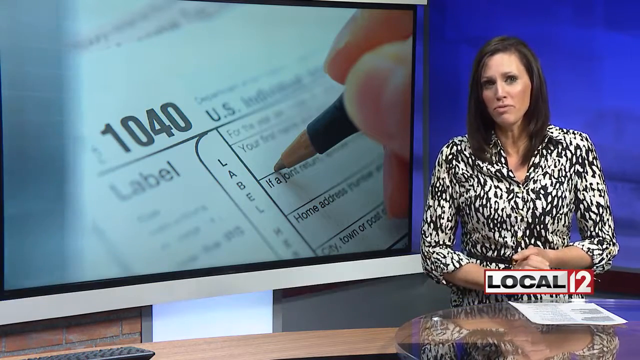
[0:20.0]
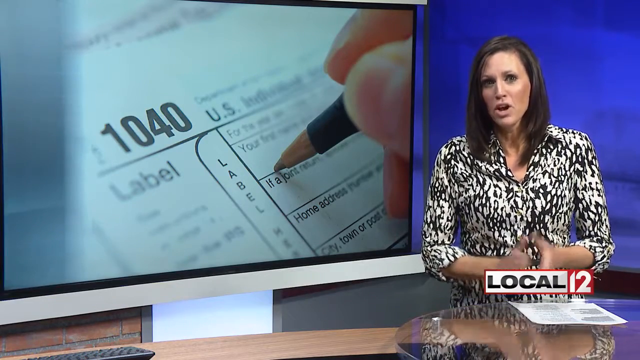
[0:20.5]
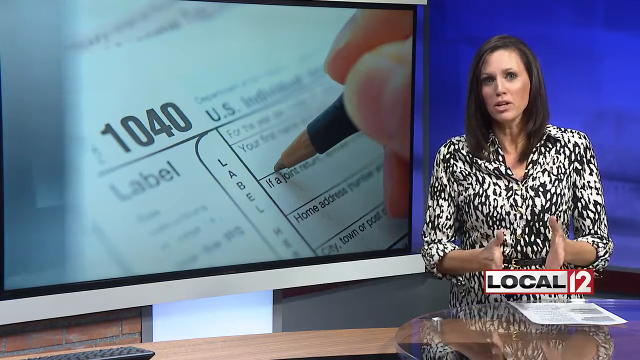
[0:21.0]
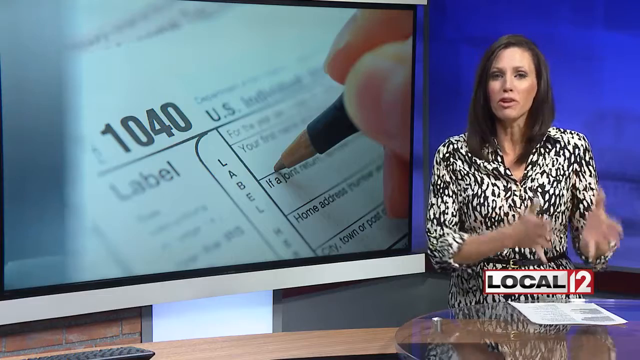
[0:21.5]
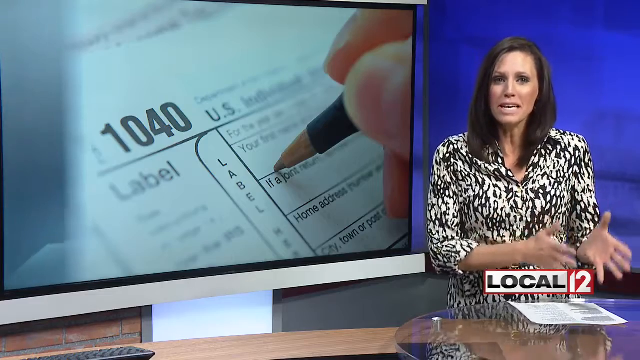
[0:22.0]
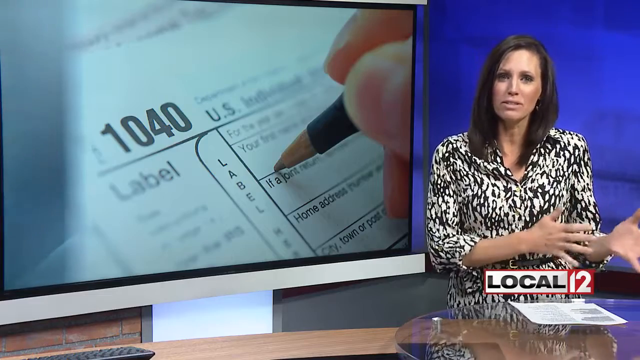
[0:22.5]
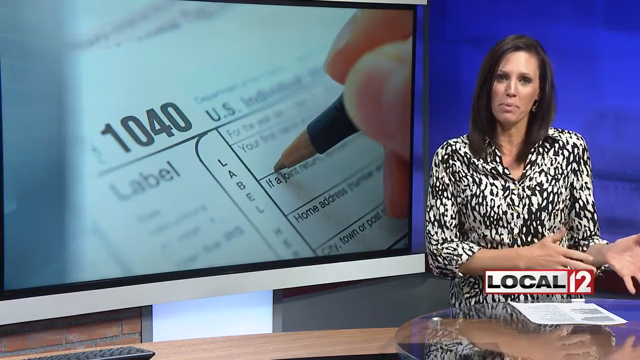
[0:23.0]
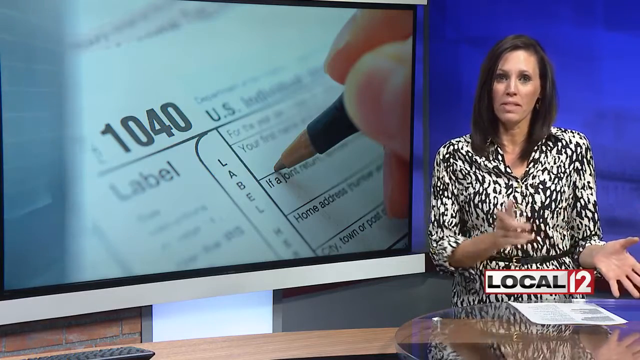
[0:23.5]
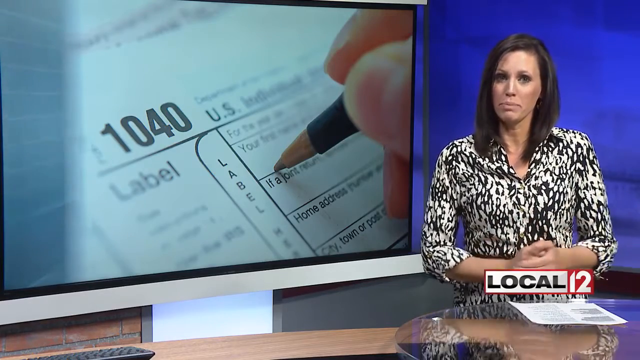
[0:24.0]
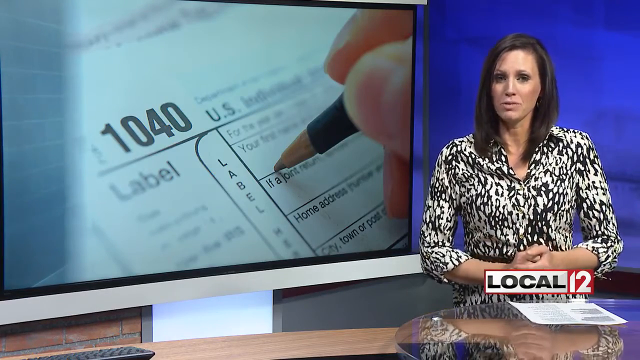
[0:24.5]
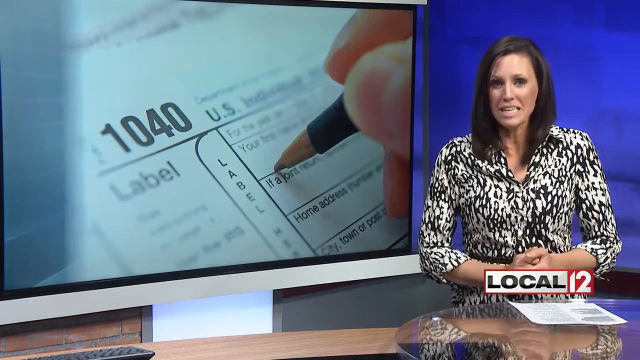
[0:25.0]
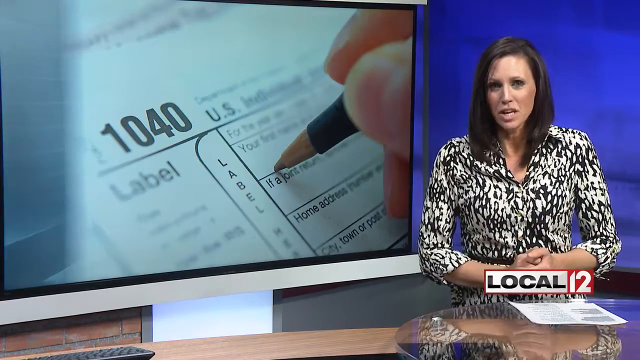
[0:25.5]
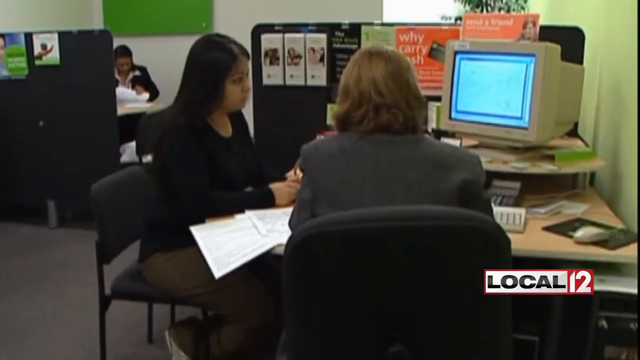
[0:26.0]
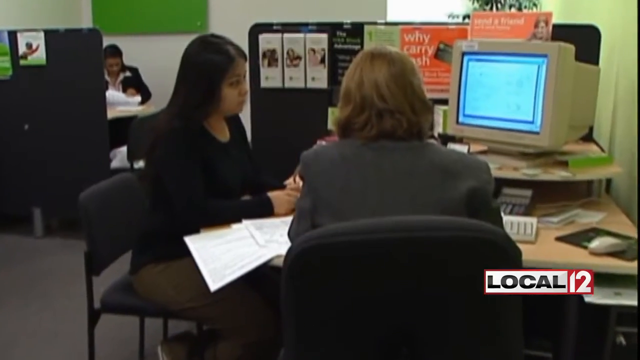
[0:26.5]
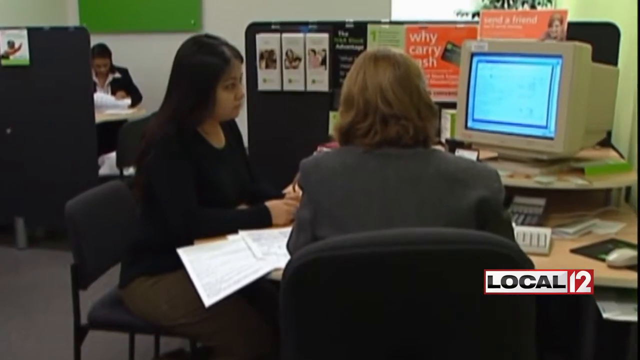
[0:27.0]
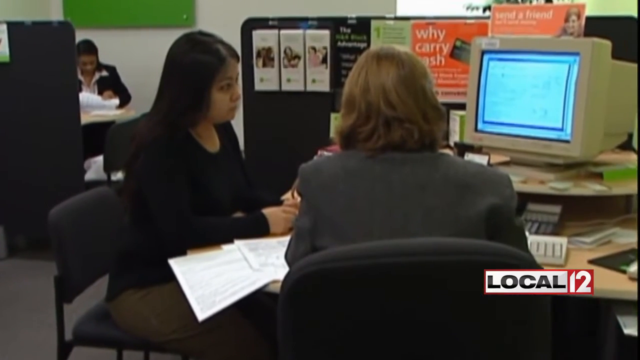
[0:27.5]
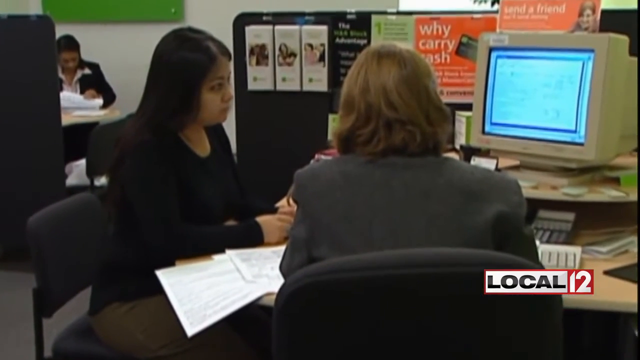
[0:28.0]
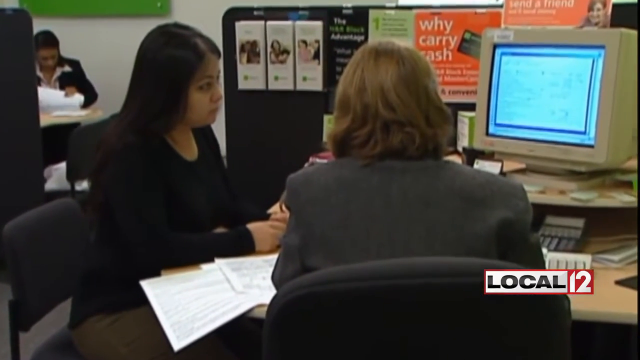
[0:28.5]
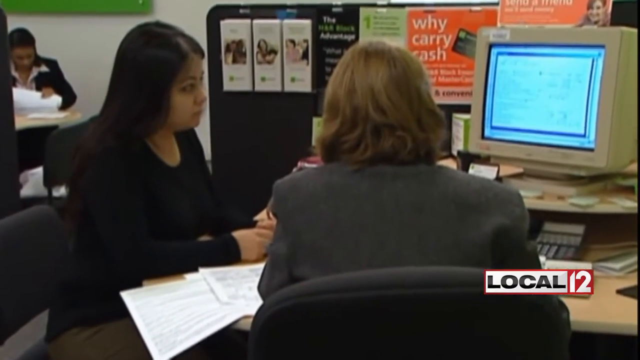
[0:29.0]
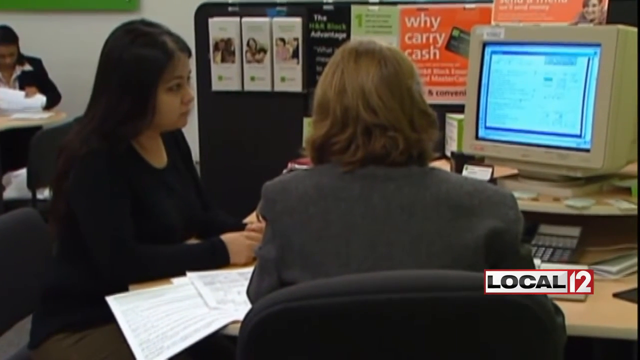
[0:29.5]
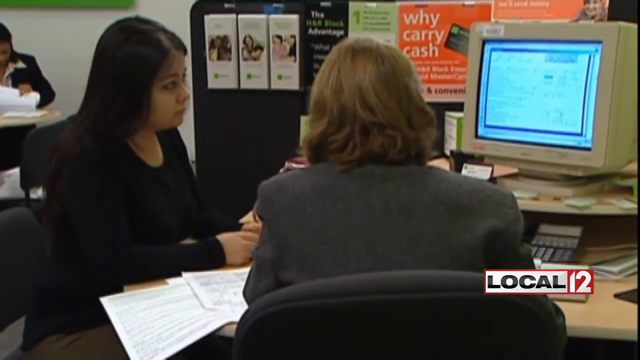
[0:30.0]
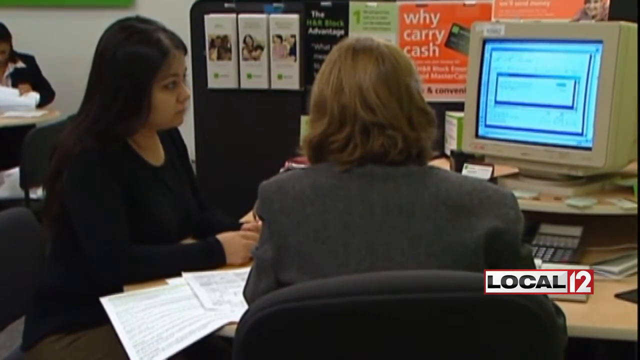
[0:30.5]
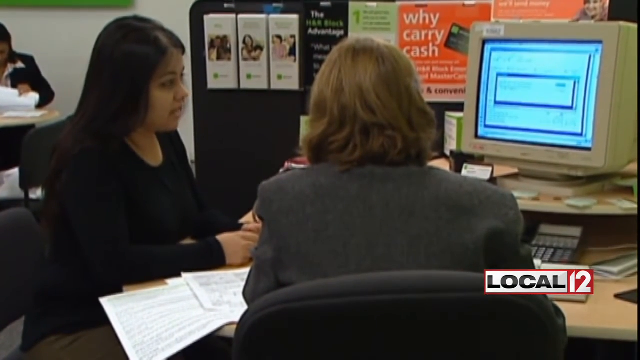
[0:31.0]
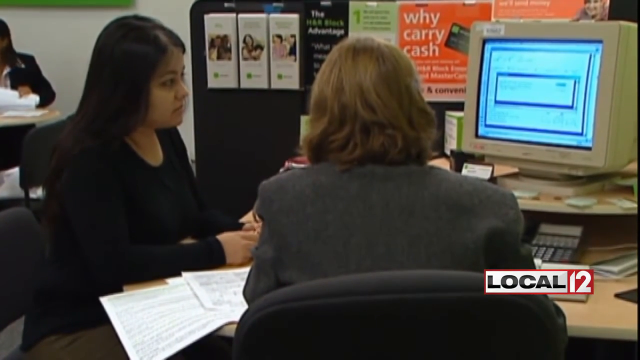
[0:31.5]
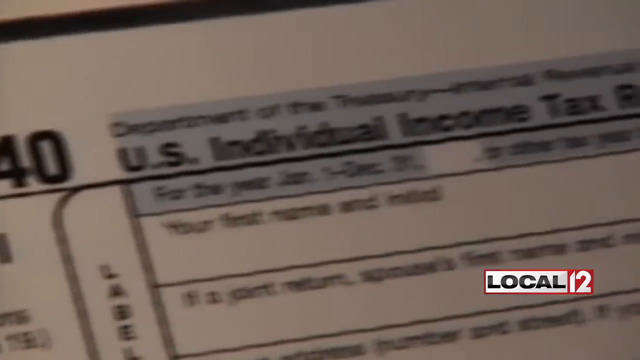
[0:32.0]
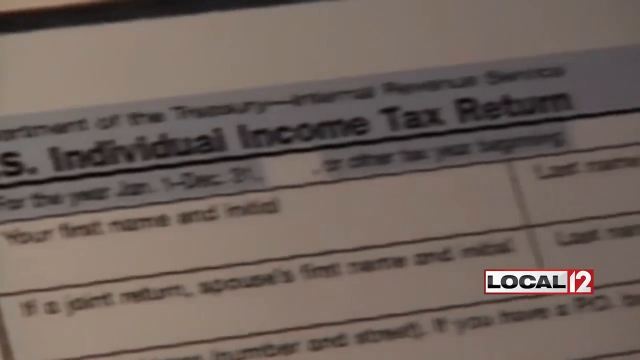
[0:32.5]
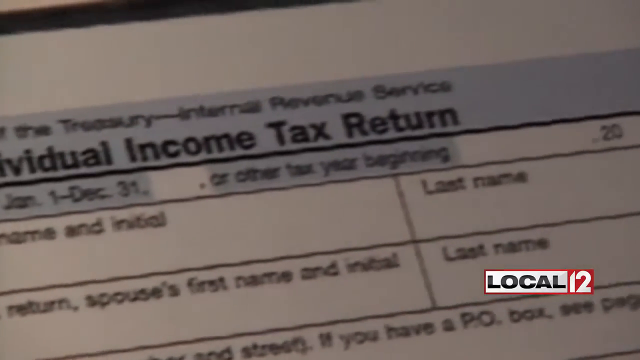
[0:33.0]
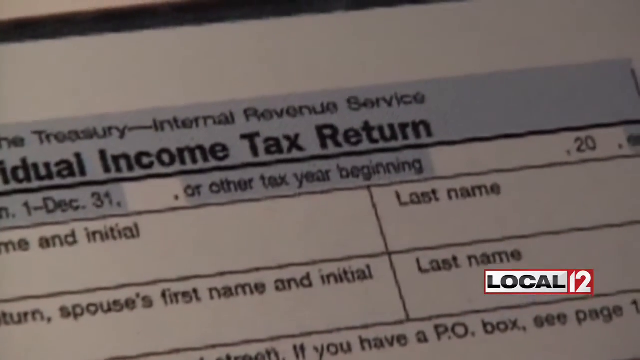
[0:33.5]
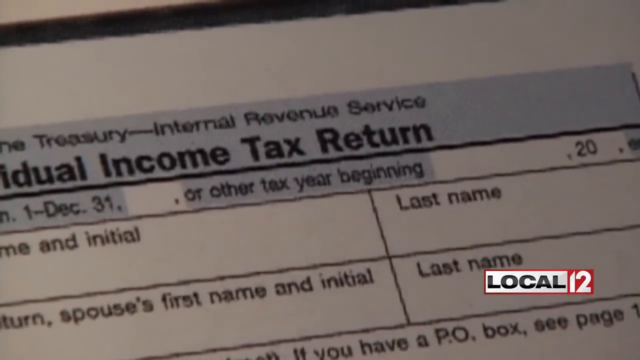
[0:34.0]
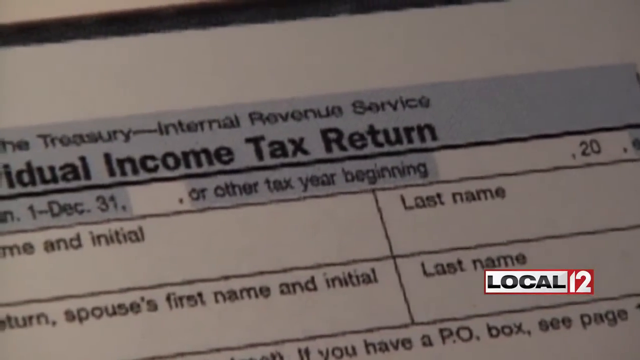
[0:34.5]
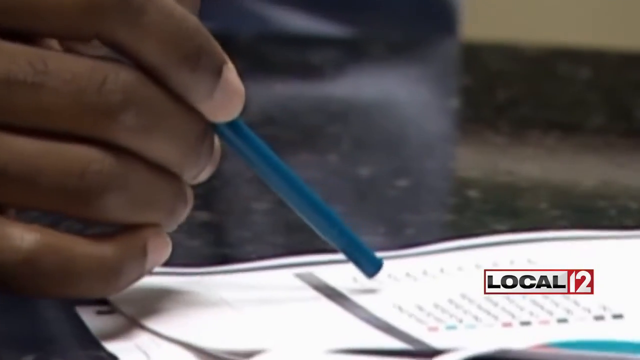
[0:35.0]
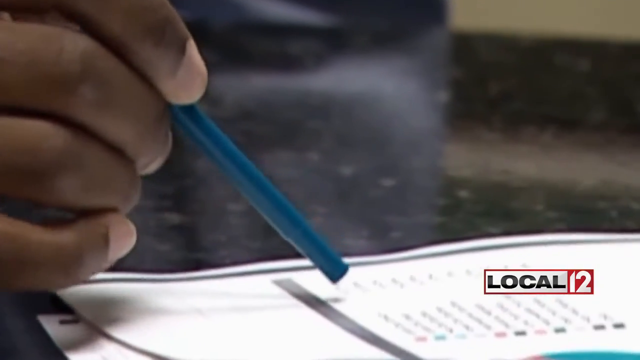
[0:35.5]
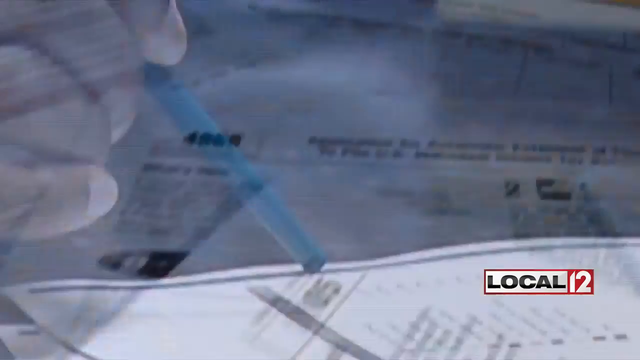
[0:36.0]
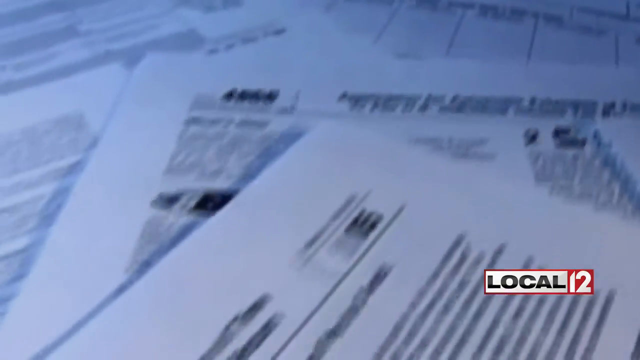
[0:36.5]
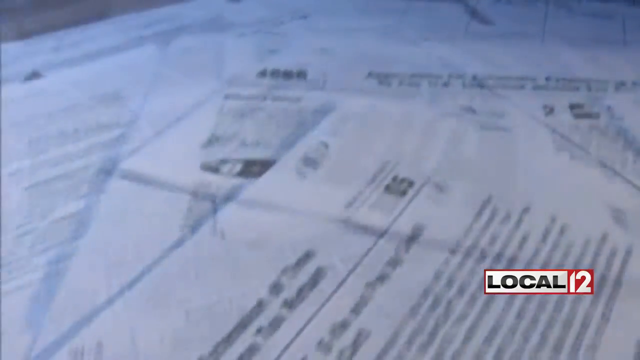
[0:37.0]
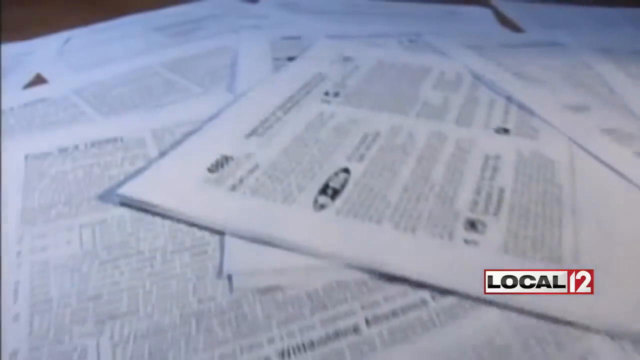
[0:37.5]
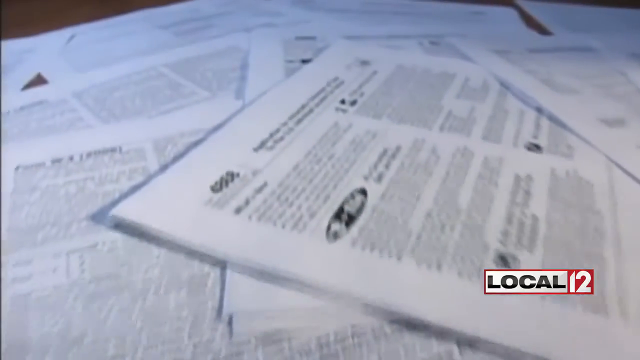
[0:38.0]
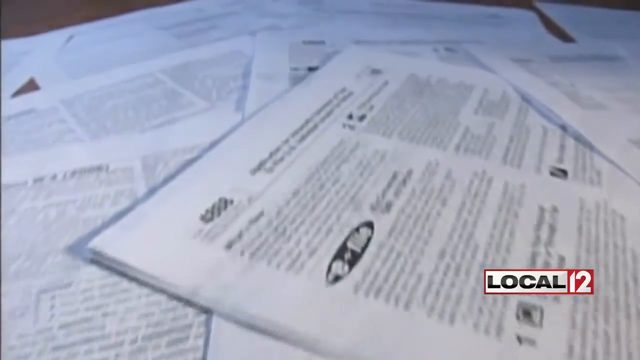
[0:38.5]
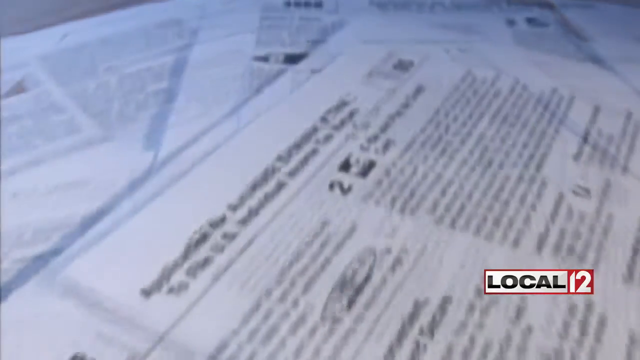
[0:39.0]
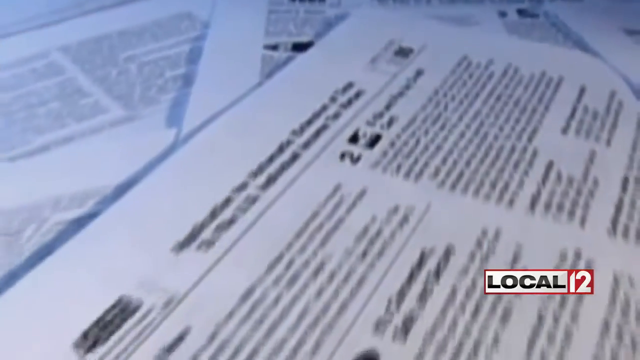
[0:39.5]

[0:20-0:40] In this news video, the channel name "Local 12" is in the lower right in red, white and black font. A female stands at a round table on the right side. On the left, a monitor shows a 1040 tax form and a light-skinned, Caucasian person holding a pen and writing their name in the first name section of the form. The video then moves to an office room with a computer on a desk on the right. Two people, both females, sit at the computer: one in front of the keyboard and the other to her left. The back of the lady on the right and the side of the lady on the left are visible. There is a plant in the background, and dividers separate the different workers' stations. The camera zooms in on the computer monitor and the two people. A sign in the background says "why carry cash?" Next, the camera scans across the 1040 tax form, showing "individual income tax return". Someone holds a blue pencil backwards, pointing its back end at a piece of paper. Multiple printed tax forms are then shown laid out across a table.